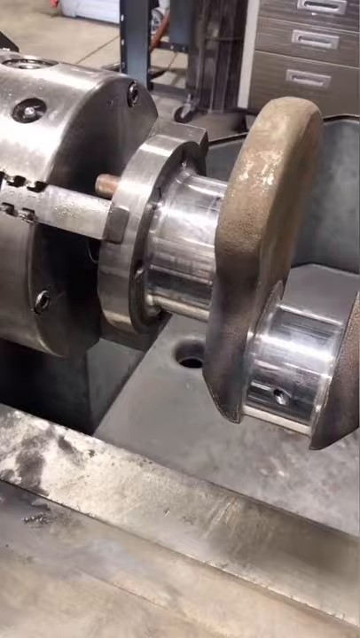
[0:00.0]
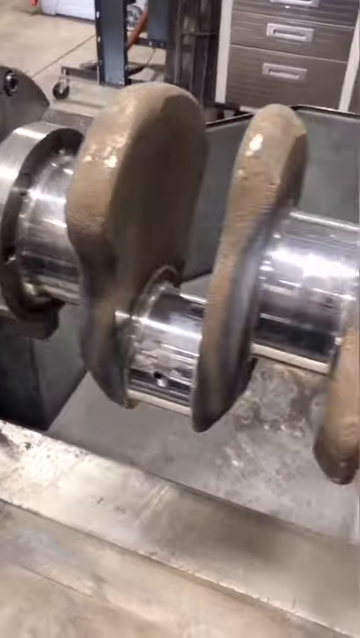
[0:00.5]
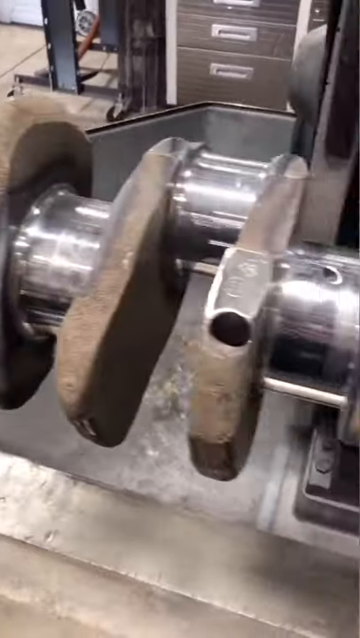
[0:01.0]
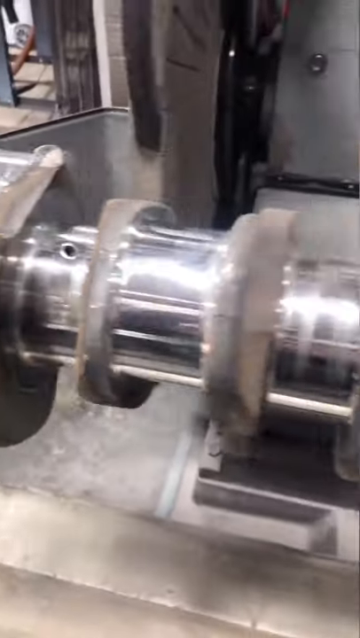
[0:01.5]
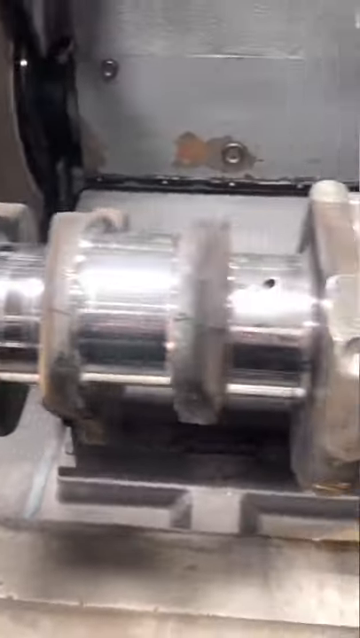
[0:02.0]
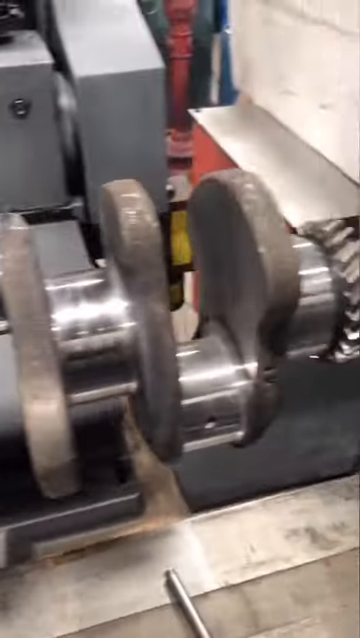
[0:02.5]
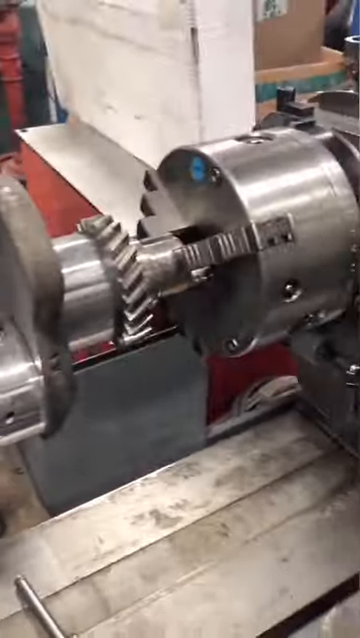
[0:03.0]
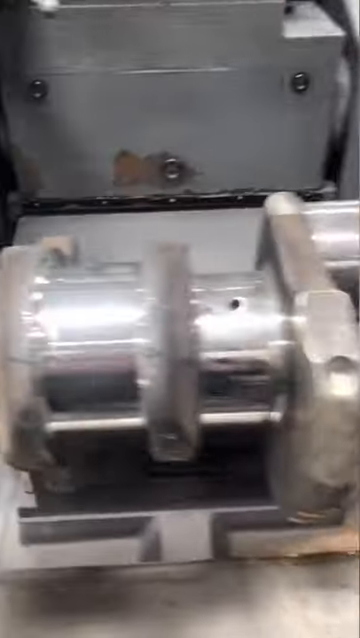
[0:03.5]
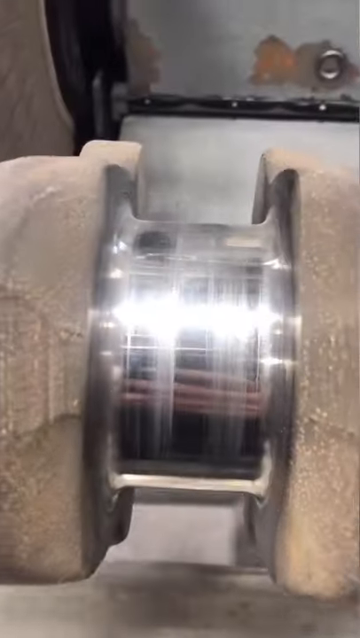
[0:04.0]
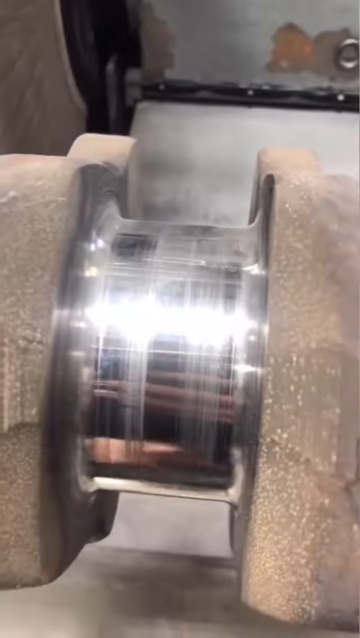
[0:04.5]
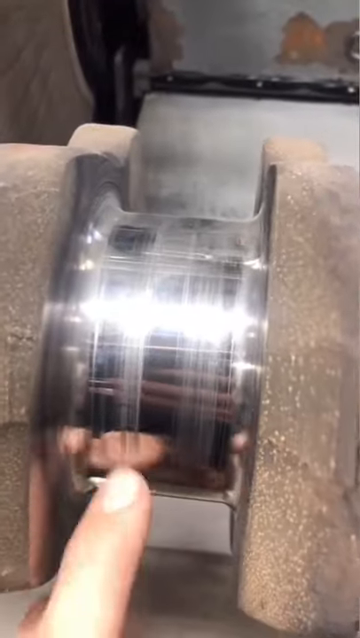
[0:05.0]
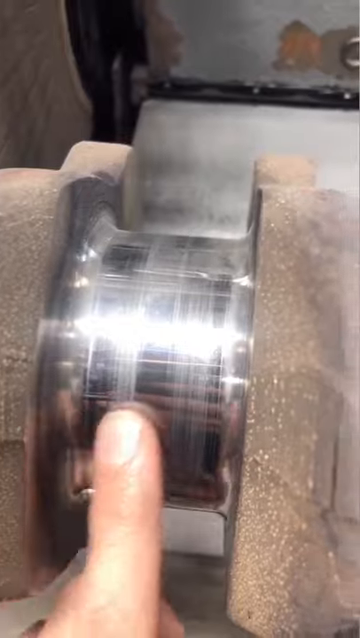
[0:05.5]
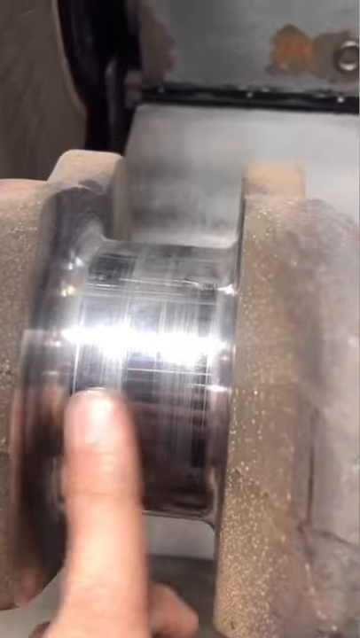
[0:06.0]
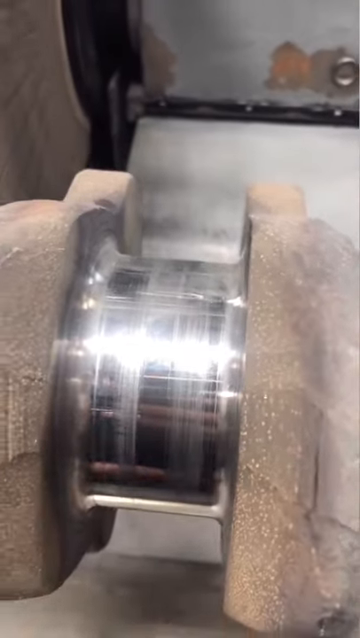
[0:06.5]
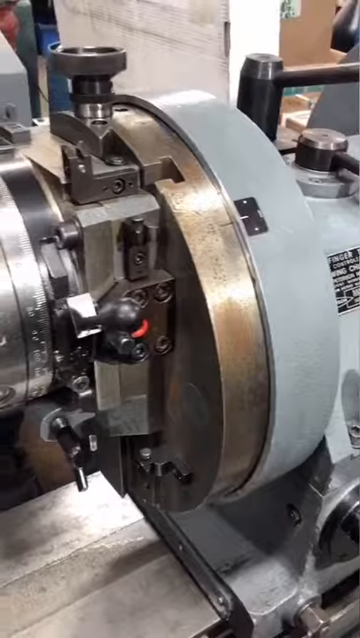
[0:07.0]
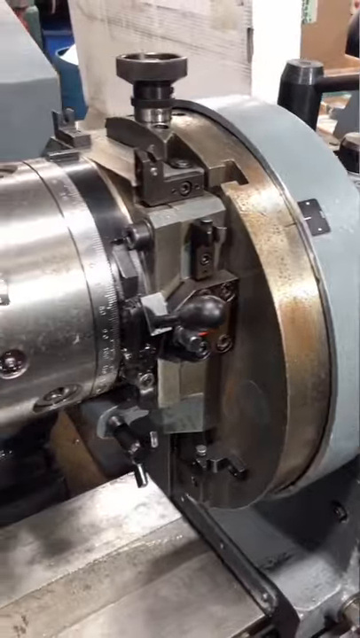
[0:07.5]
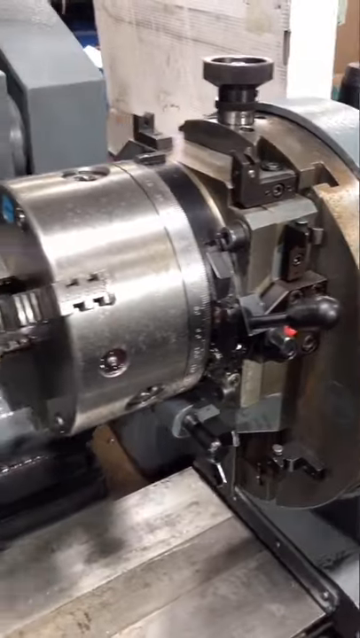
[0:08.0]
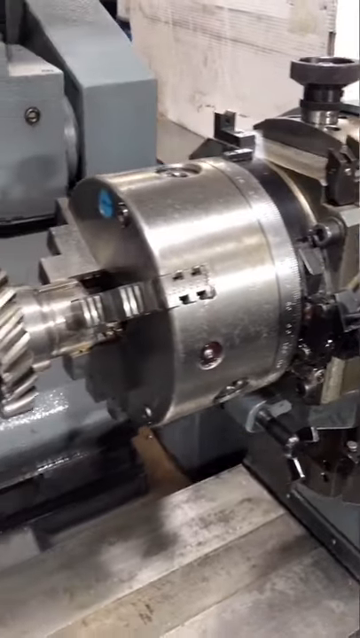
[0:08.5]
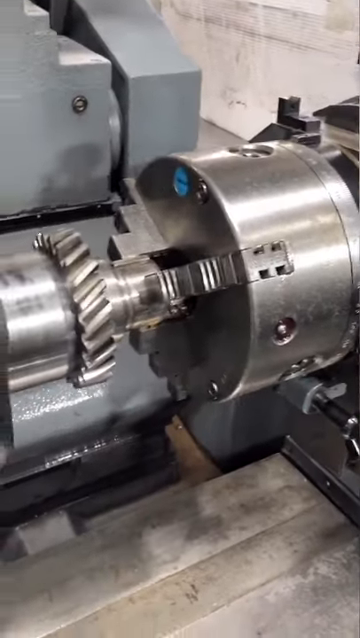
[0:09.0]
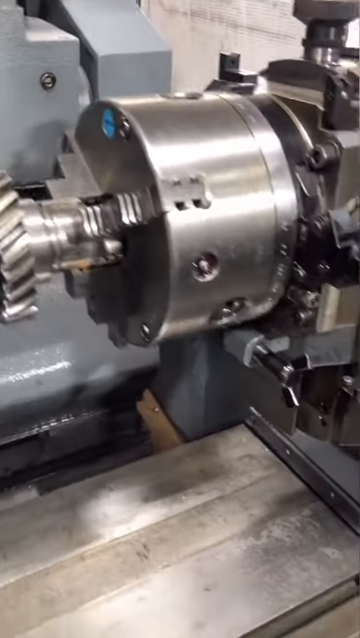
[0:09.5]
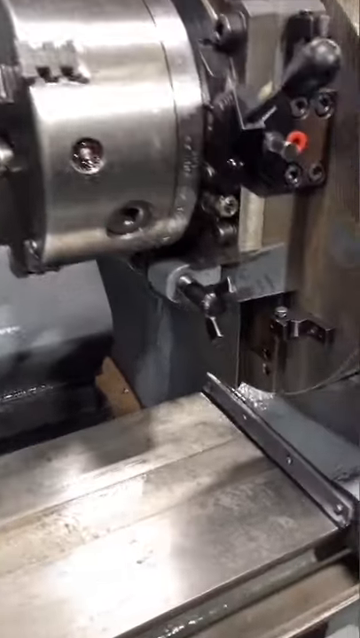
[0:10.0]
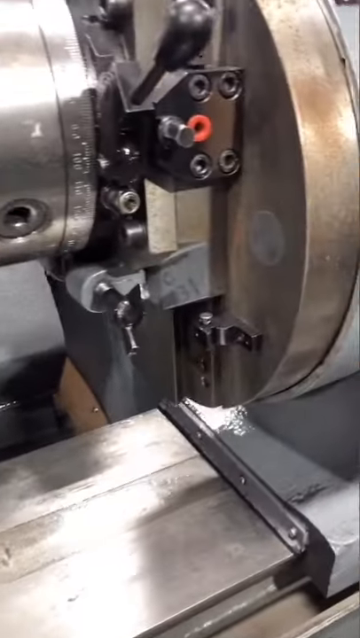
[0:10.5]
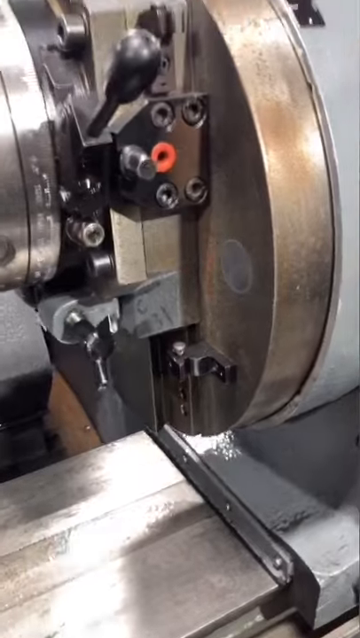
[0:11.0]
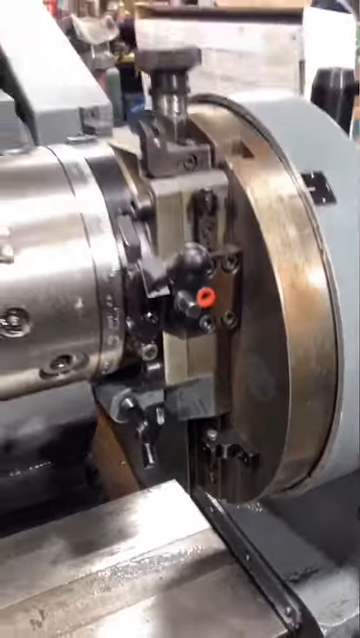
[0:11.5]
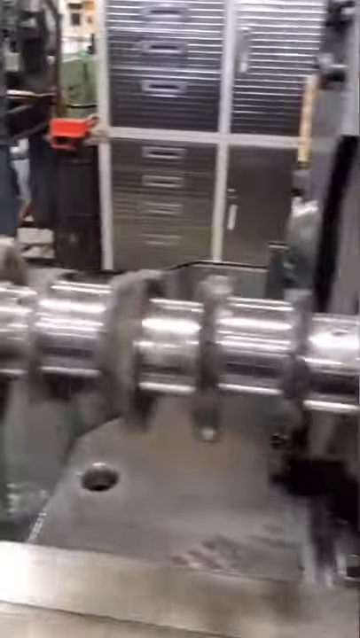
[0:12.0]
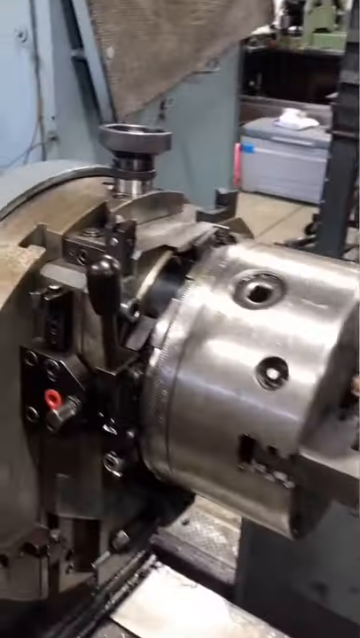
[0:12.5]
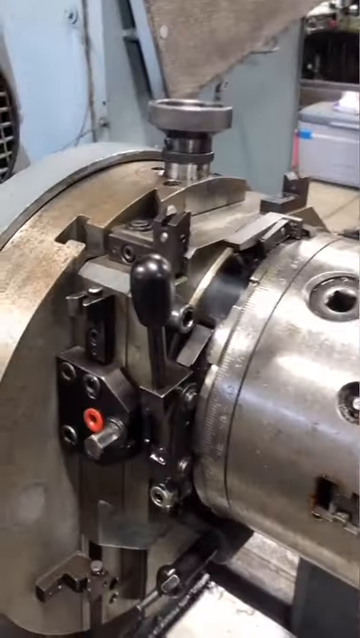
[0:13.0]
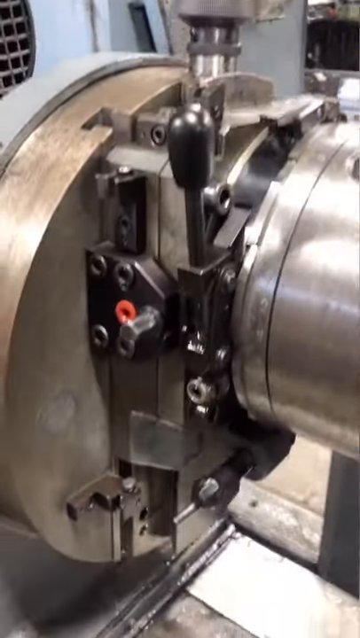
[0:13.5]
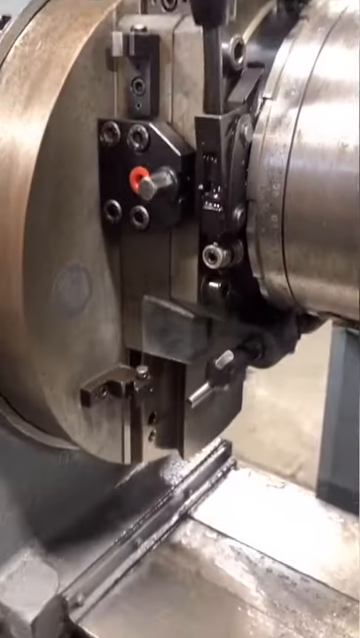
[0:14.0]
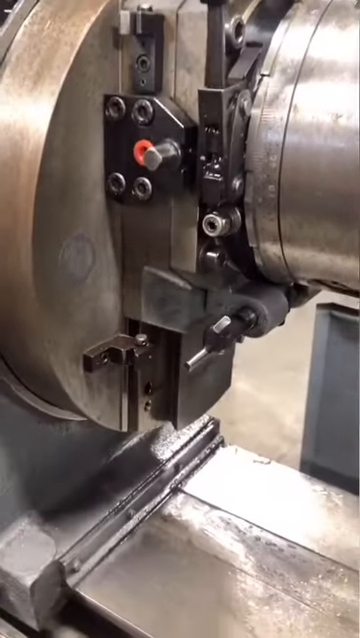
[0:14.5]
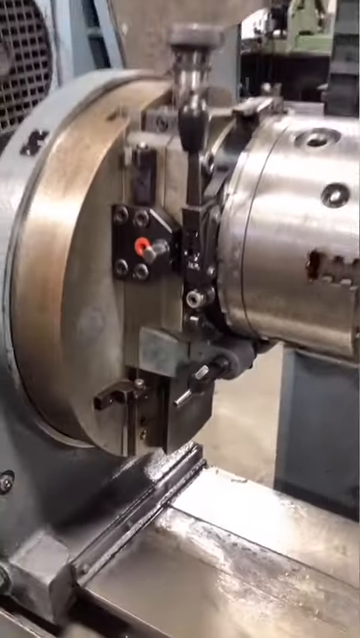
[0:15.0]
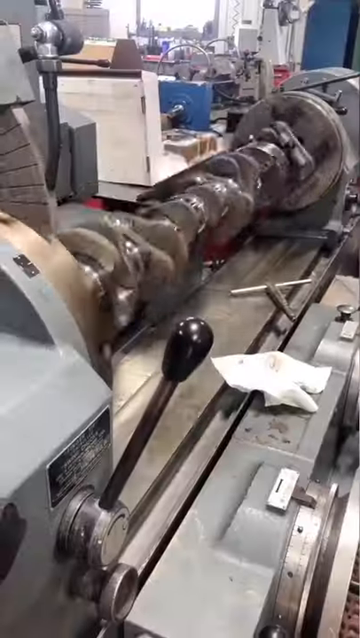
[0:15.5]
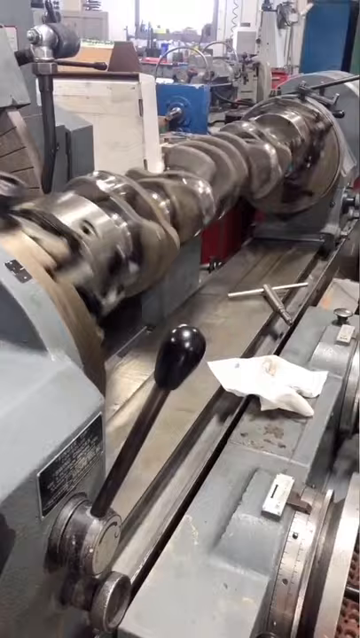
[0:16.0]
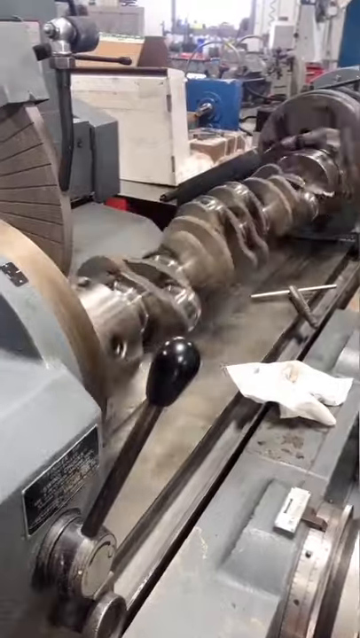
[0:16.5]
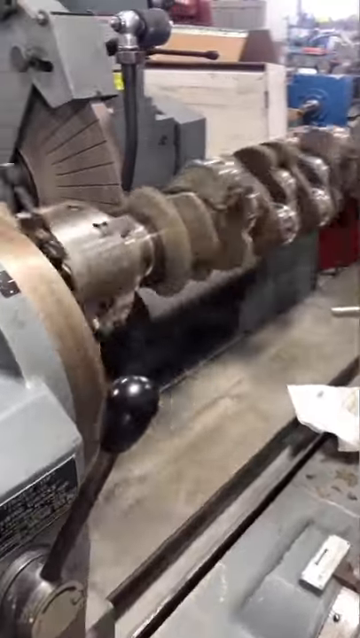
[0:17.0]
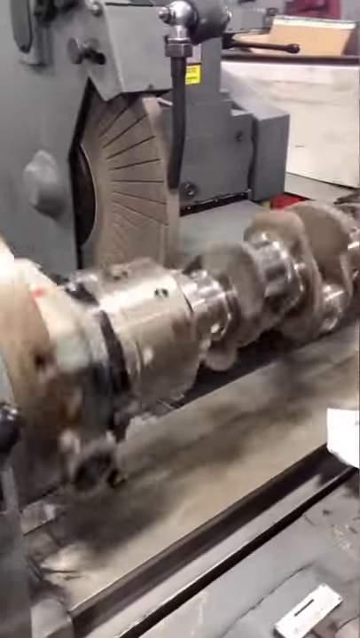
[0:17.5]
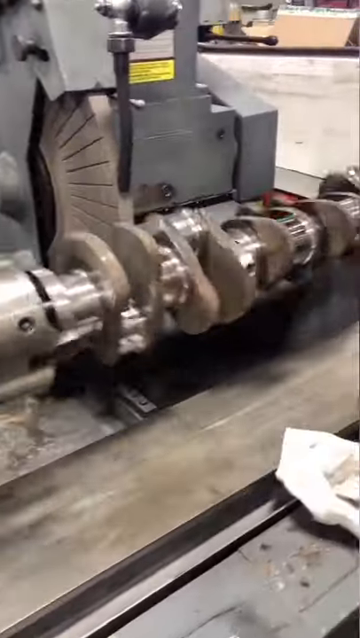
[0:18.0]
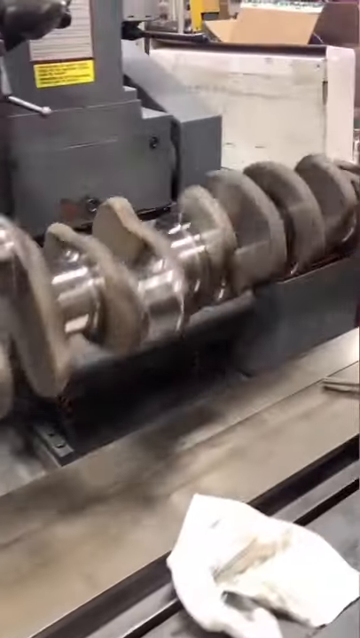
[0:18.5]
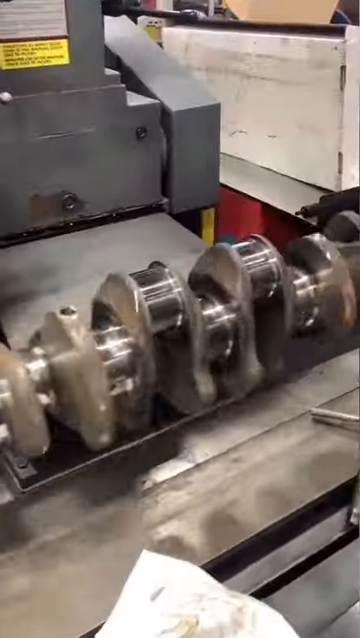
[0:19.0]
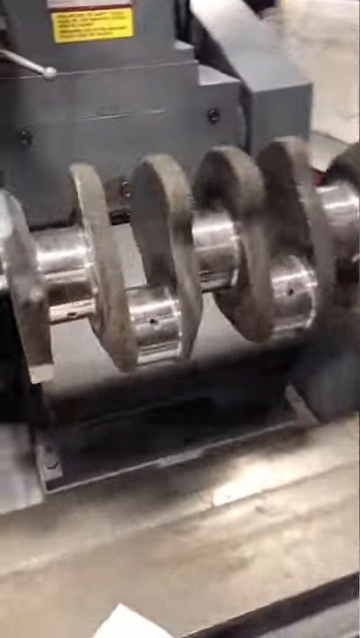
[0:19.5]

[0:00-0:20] On-screen text reads "Shorts how a crankshaft is reground." A piece of machinery is shown, with someone's hand in the shot pointing at it. The machinery, apparently a crankshaft, goes around in a circle. It is a long rod with grooves on it, with controls on either side, and it rotates. Someone's finger points at a certain piece of the crankshaft. Different angles of the crankshaft follow, showing it in motion going around and around. It is a big piece of machinery that appears to be in some sort of garage area, with handles on it that operate it. There is an unidentified white item below the crankshaft.